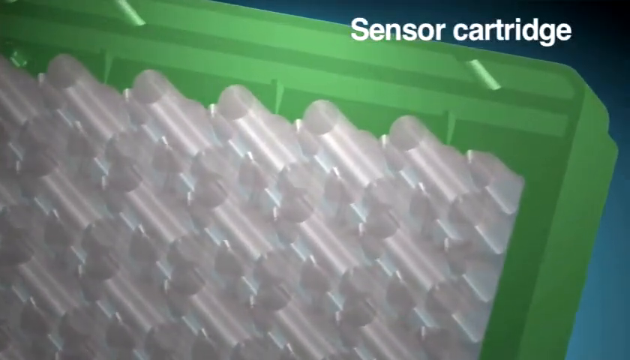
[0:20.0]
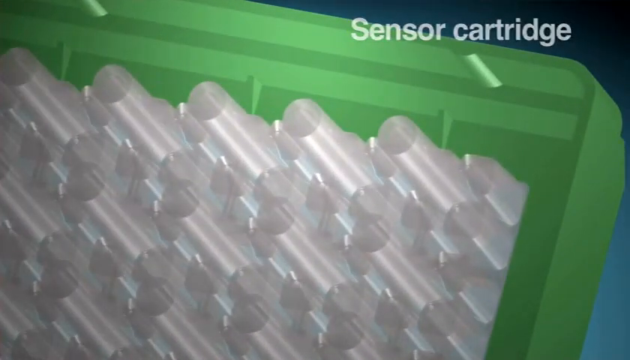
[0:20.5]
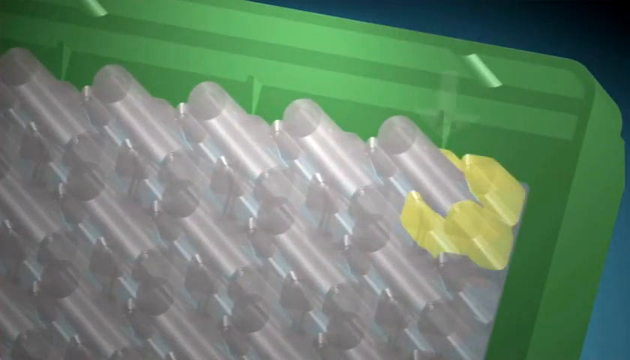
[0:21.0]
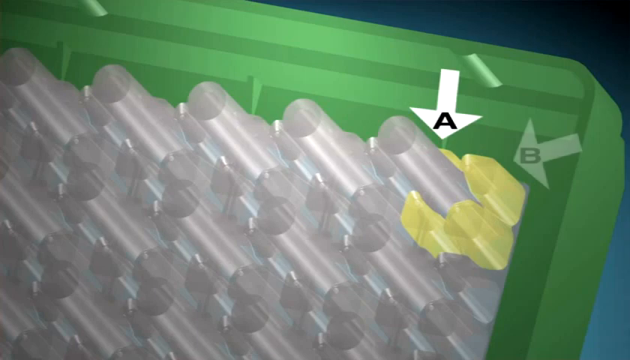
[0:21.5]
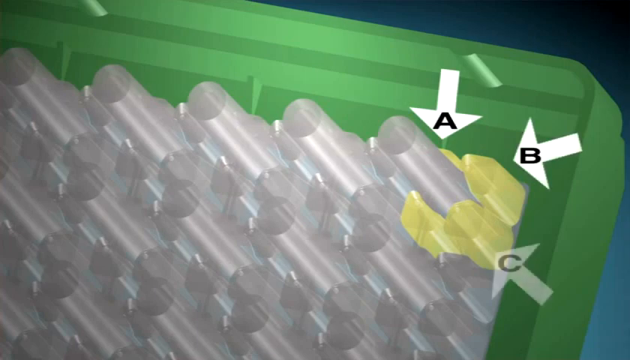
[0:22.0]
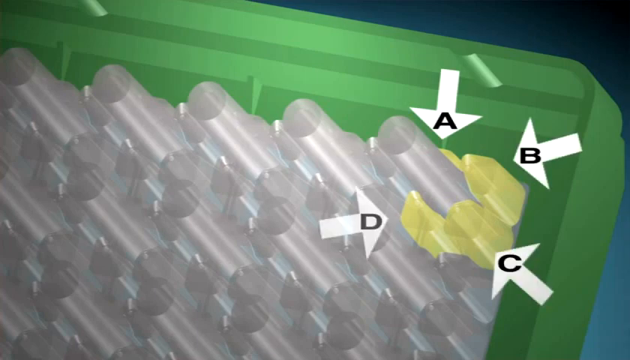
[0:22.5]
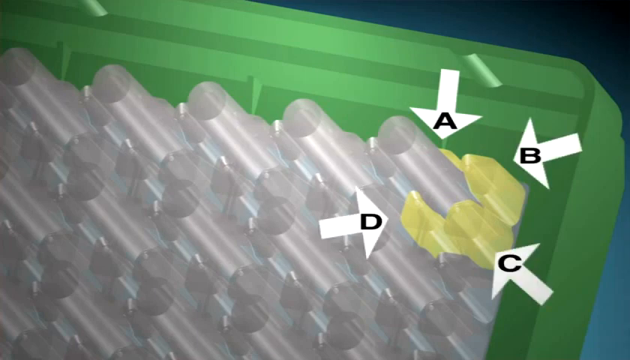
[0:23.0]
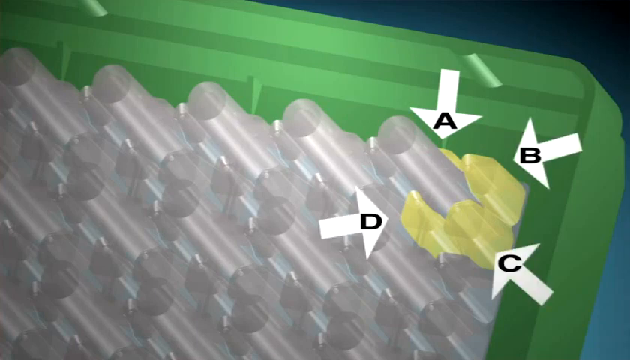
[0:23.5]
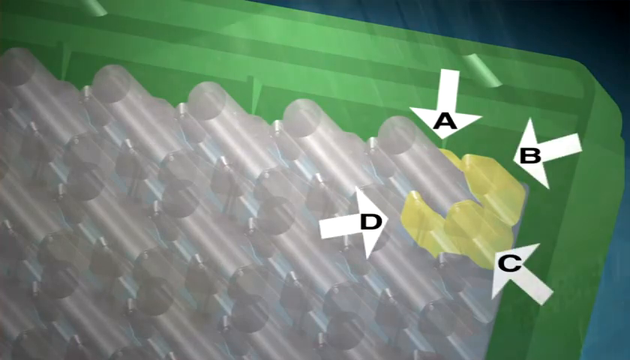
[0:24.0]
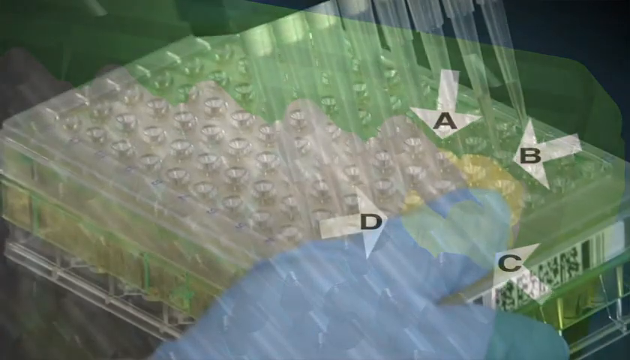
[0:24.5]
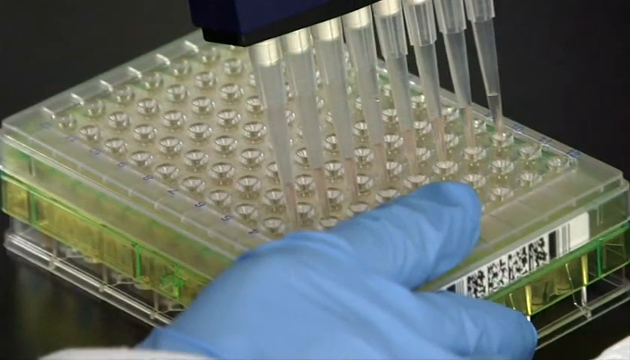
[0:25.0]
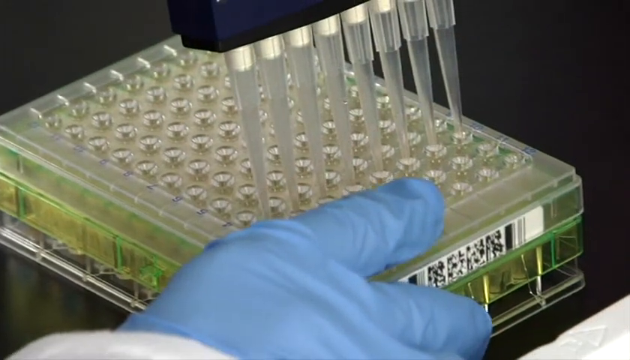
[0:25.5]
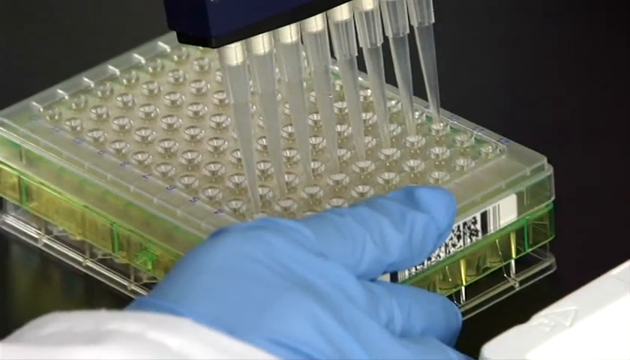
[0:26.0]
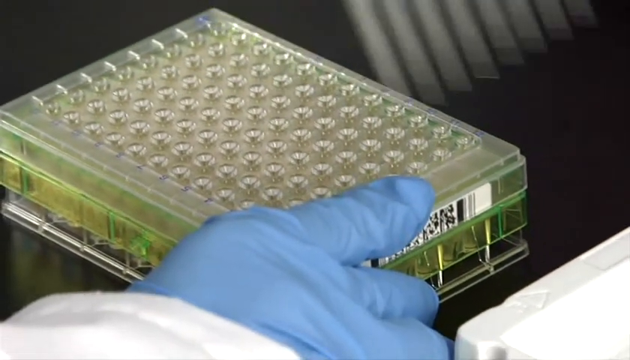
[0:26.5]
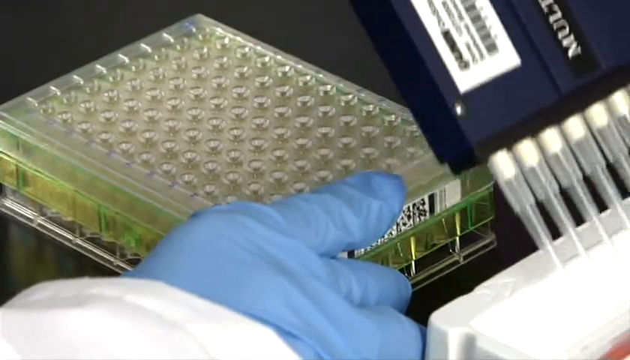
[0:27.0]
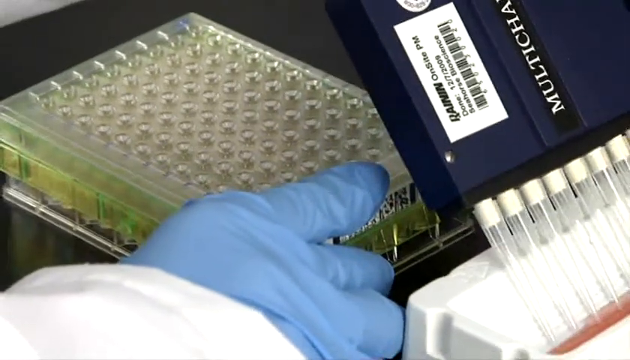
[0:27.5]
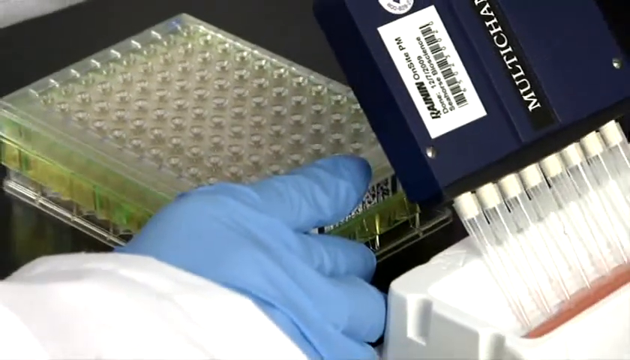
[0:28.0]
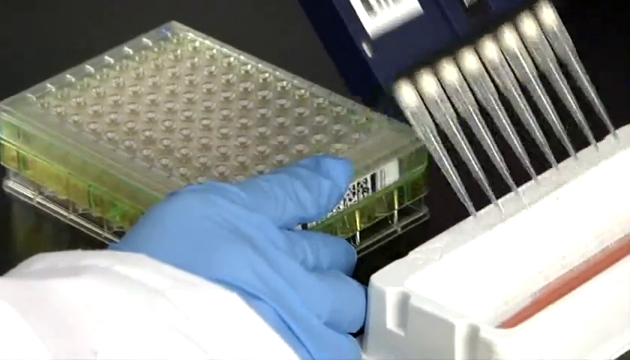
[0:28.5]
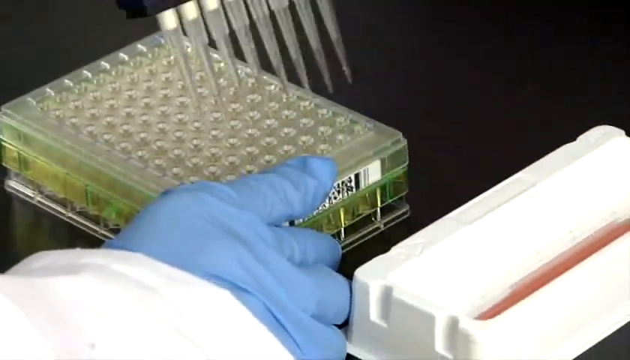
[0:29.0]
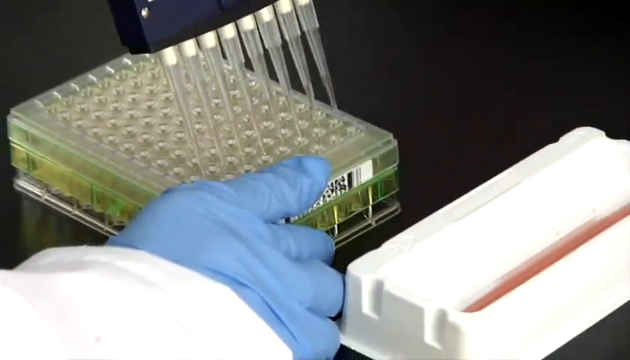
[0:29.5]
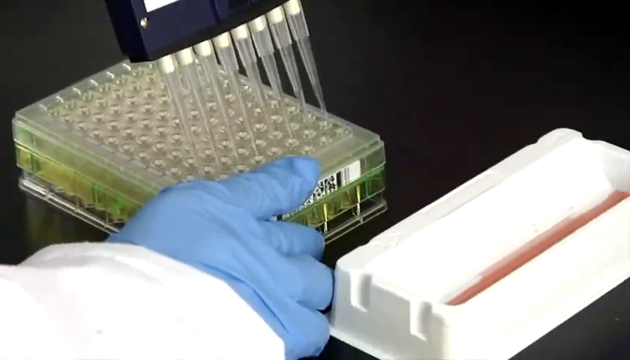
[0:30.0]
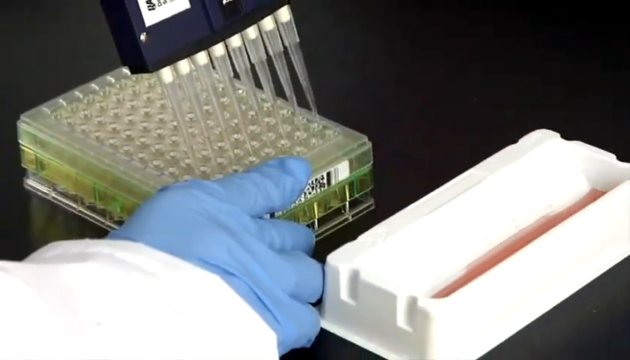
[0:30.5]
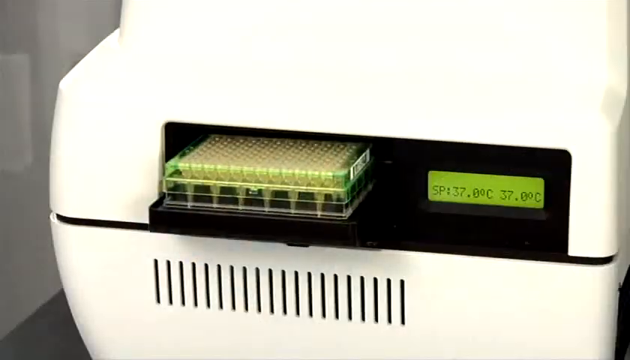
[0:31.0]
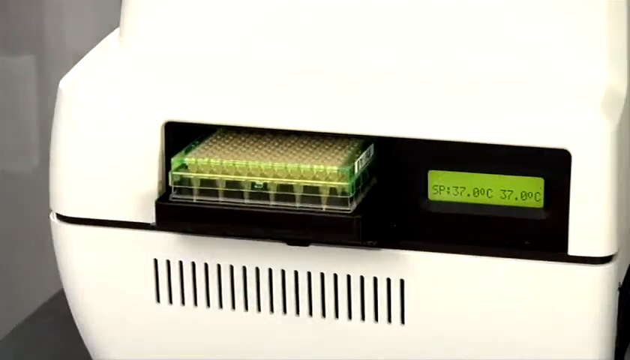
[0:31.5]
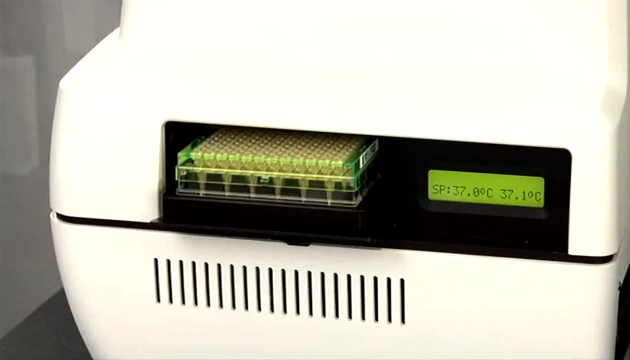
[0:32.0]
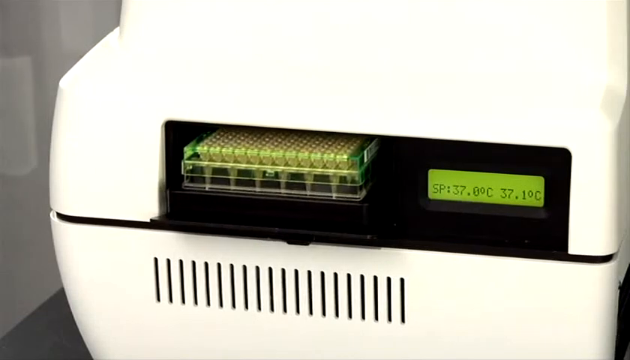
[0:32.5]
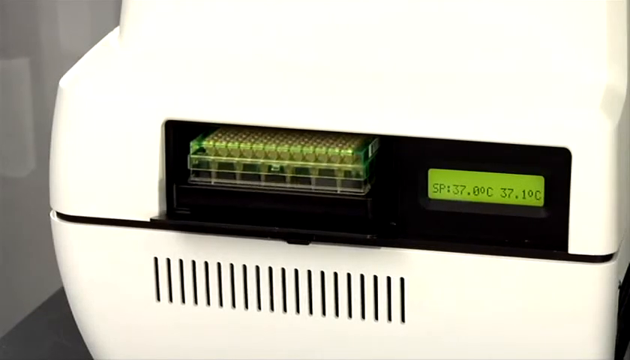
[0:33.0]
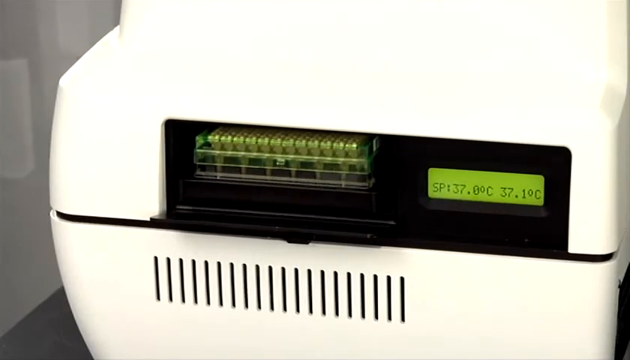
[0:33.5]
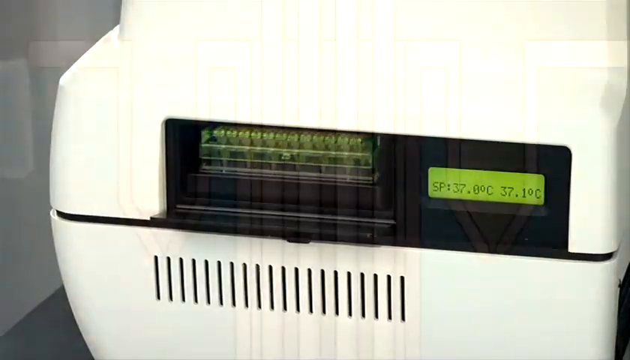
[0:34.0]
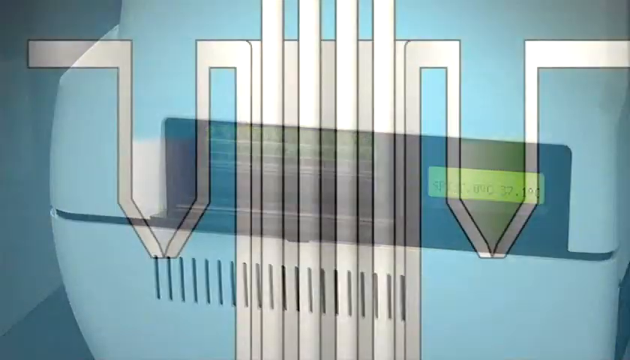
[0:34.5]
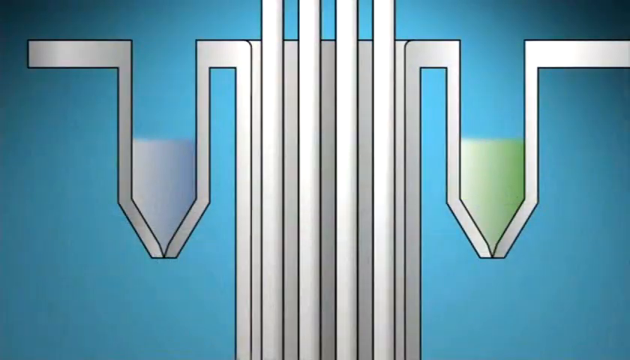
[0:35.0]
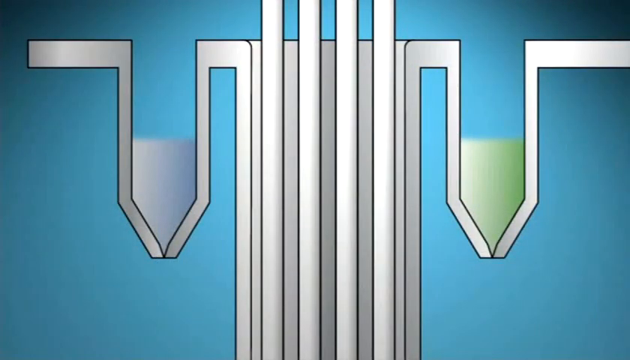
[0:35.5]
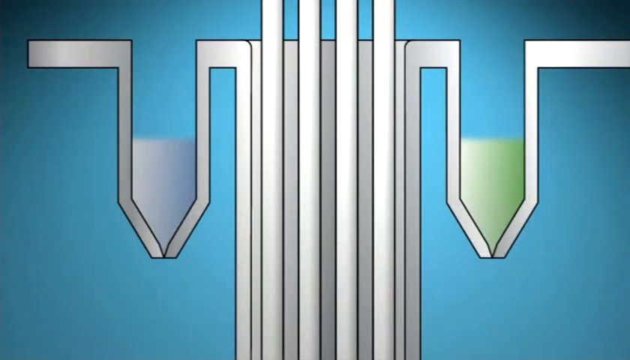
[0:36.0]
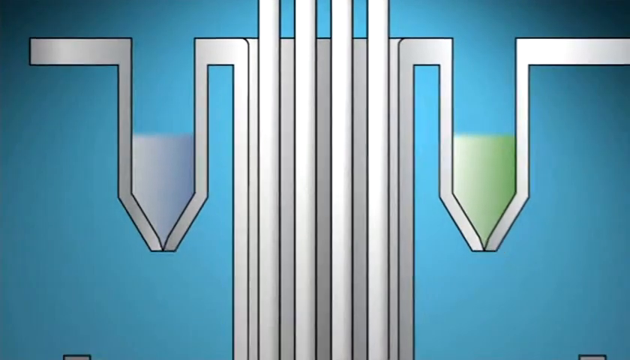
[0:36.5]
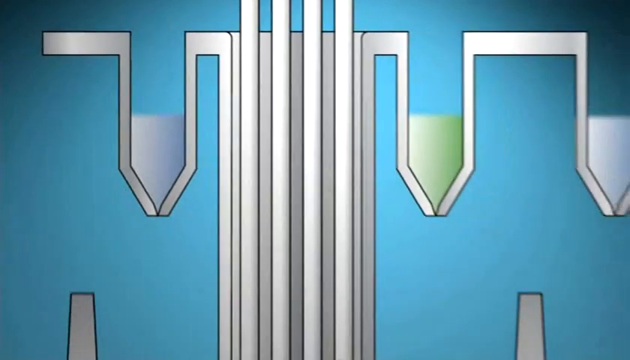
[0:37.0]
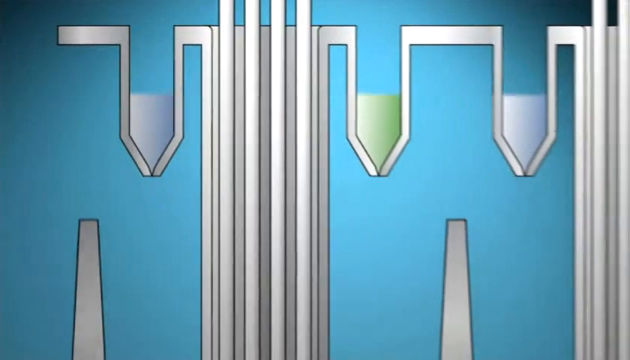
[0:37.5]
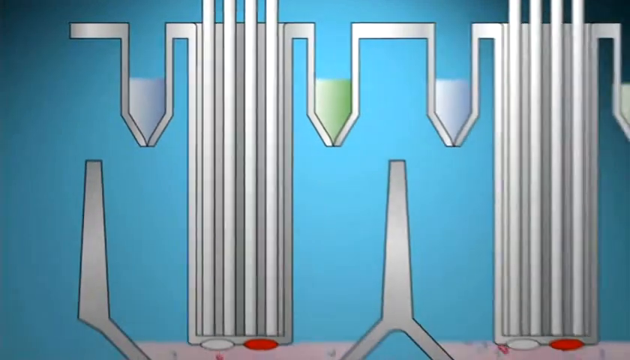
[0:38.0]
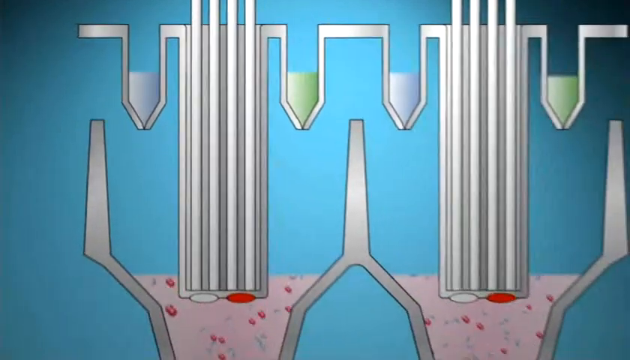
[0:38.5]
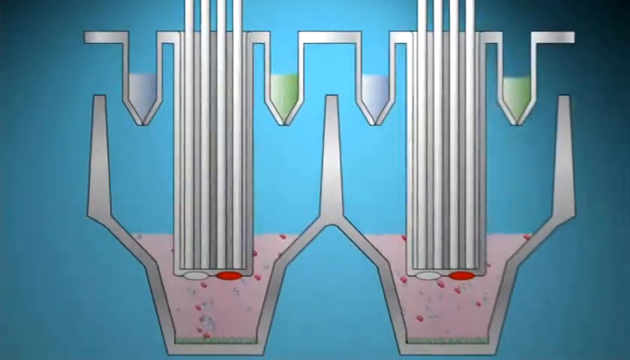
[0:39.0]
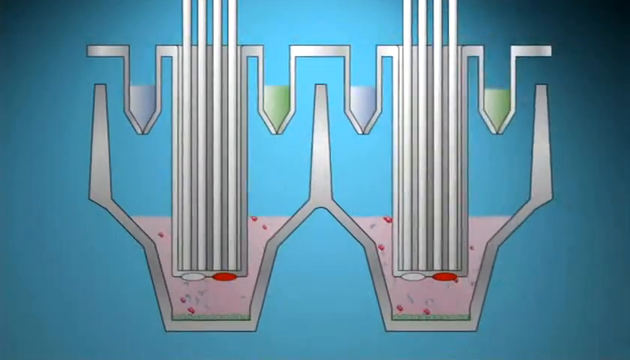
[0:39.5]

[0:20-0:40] What looks like a 3D animation or diagram shows what looks like a green rectangular container with many white cylinders inside, pointing upward. The view zooms into one of its right corners, white text at the top left reads "sensor cartridge", and it zooms in on one of the white cylinders. Around the white cylinder there appear to be four yellow cylinders, labelled "A", "B", "C" and "D", with white arrows pointing to the four yellow-highlighted cylinders. The scene changes to what looks like a row of nine pipettes. There are test tubes on the left side in rows of nine, and it looks like someone is pipetting liquid into them, moving to the right, picking up some liquid, and pipetting it into the next row; a hand in blue vinyl gloves appears at the bottom middle, on the table. Then the test tubes, on a green tray, slowly go into a white machine whose green LCD screen reads "SP 37 degrees" and "37.1 degrees Celsius". Next comes a diagram with what look like two pipettes, one on the left with blue liquid and one on the right with green liquid. There are two sets of them, and both go downward into some sort of pink liquid with red floating particles.